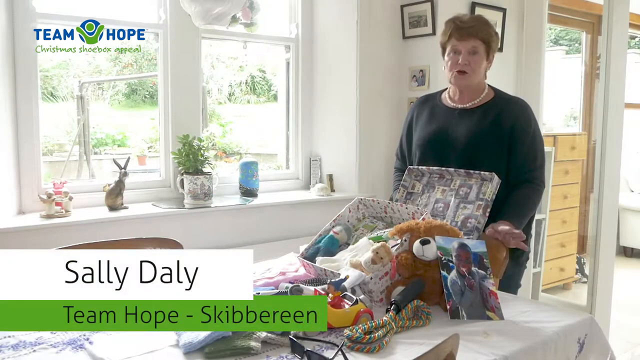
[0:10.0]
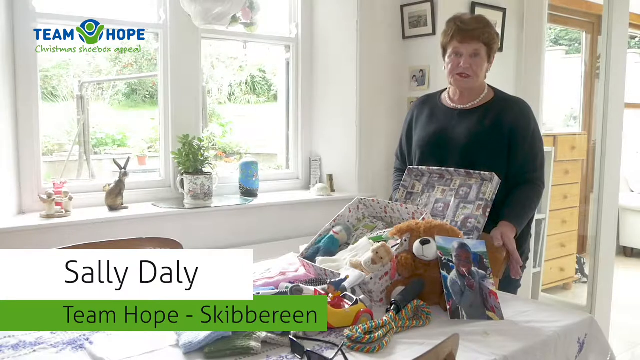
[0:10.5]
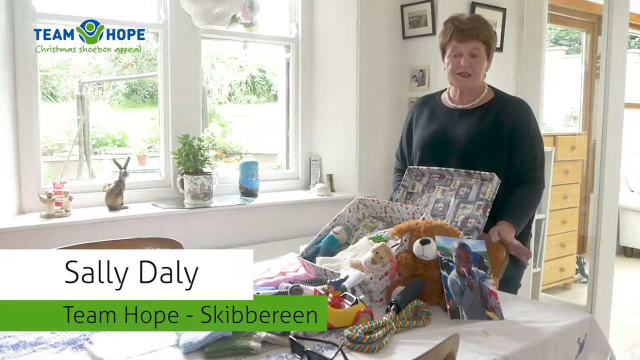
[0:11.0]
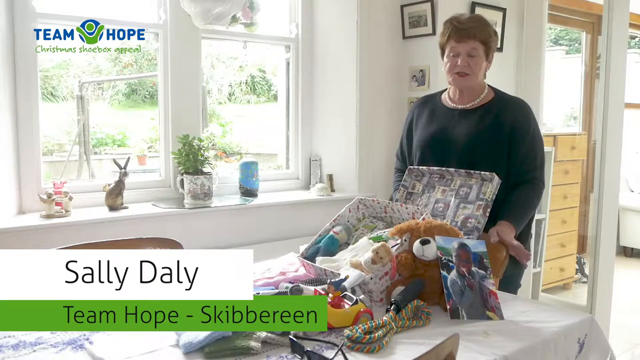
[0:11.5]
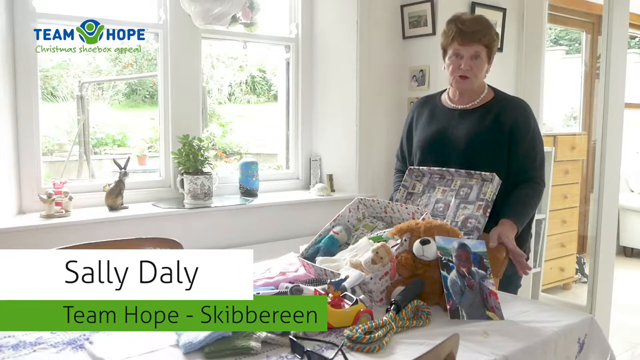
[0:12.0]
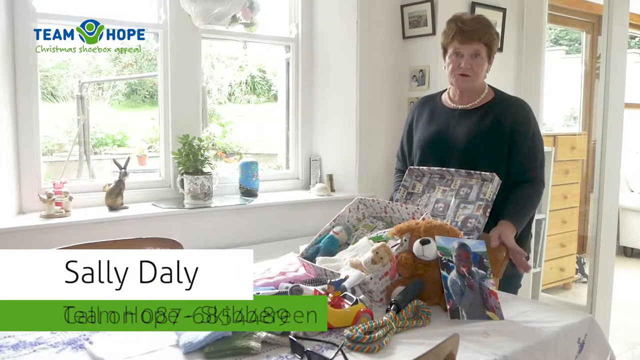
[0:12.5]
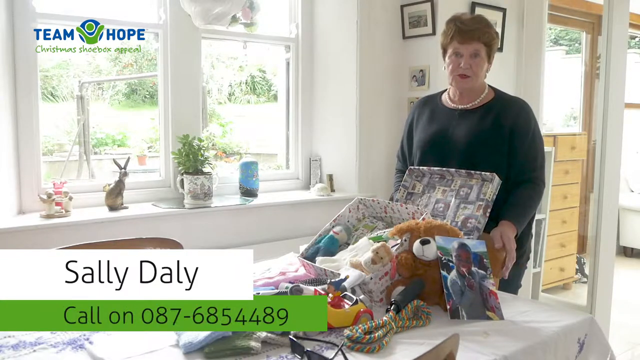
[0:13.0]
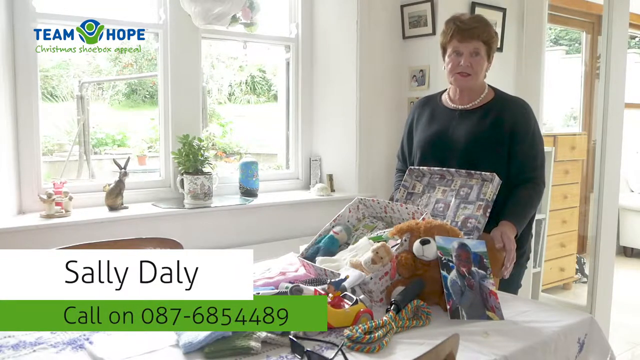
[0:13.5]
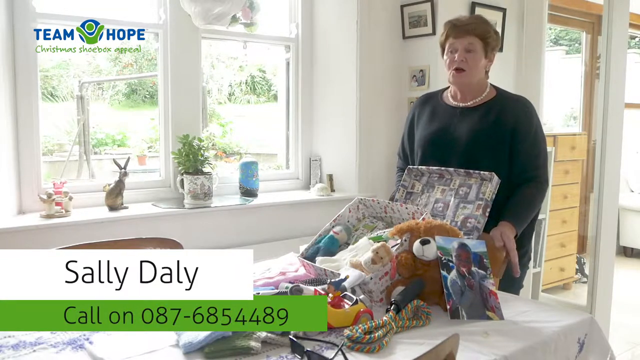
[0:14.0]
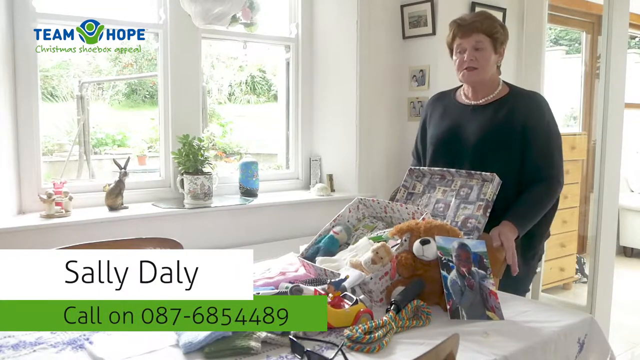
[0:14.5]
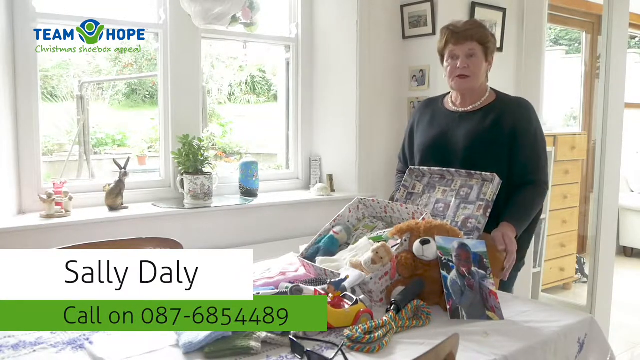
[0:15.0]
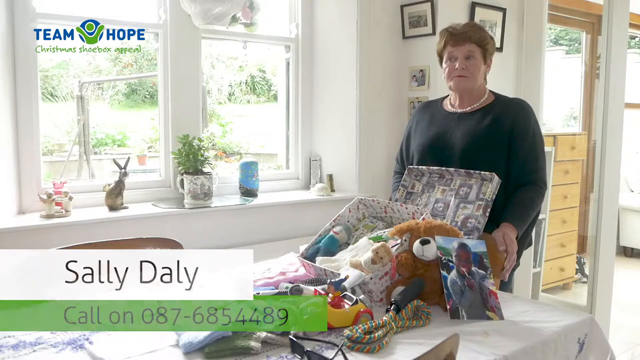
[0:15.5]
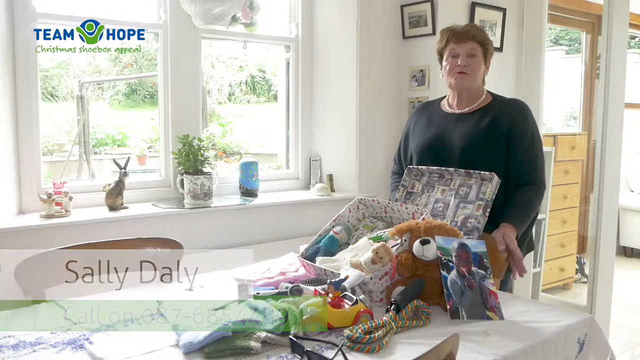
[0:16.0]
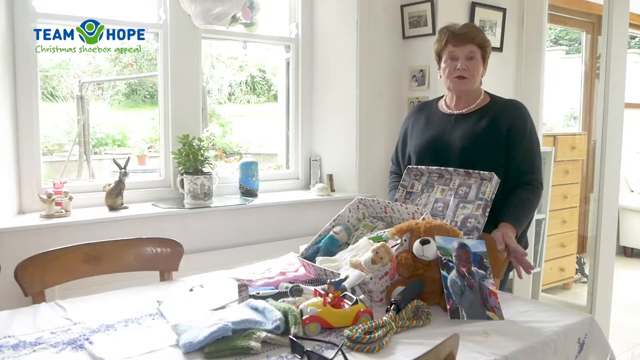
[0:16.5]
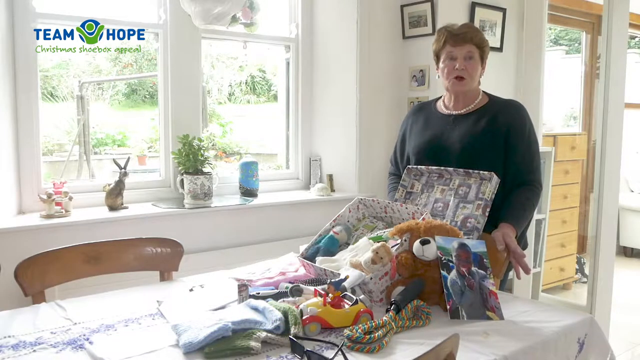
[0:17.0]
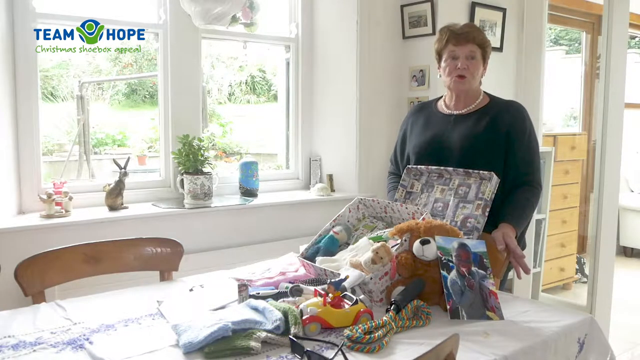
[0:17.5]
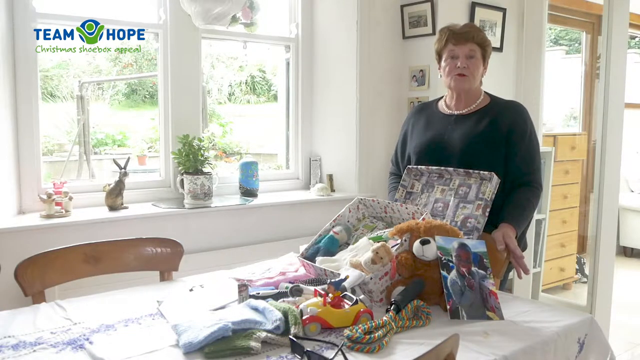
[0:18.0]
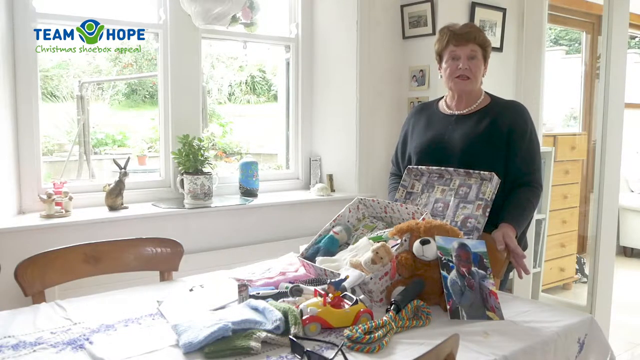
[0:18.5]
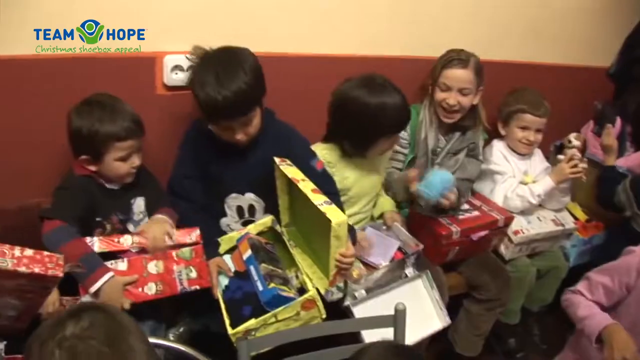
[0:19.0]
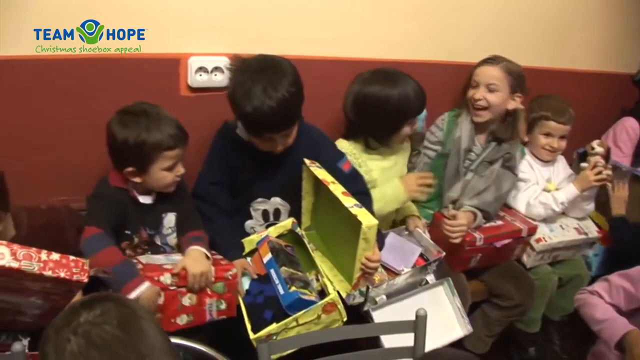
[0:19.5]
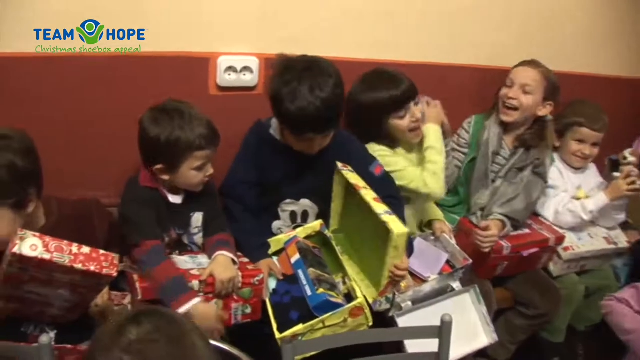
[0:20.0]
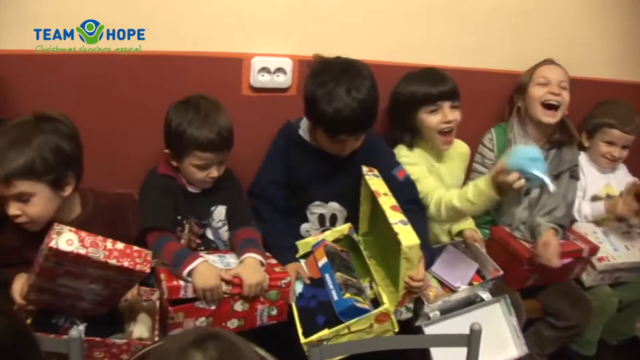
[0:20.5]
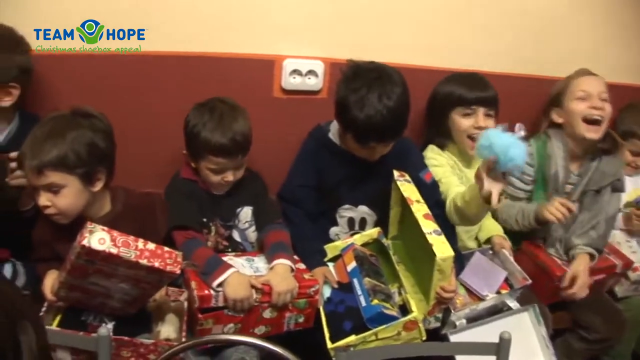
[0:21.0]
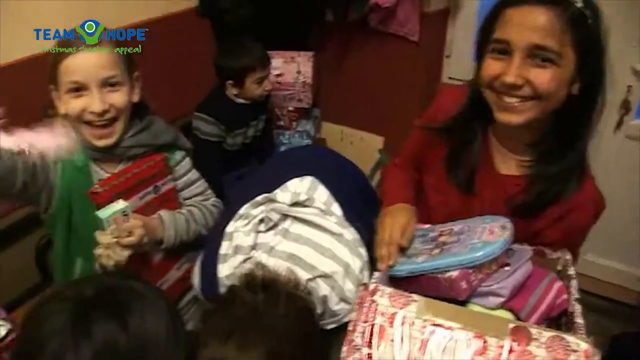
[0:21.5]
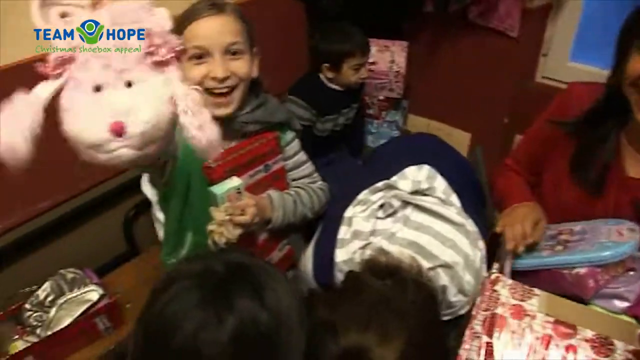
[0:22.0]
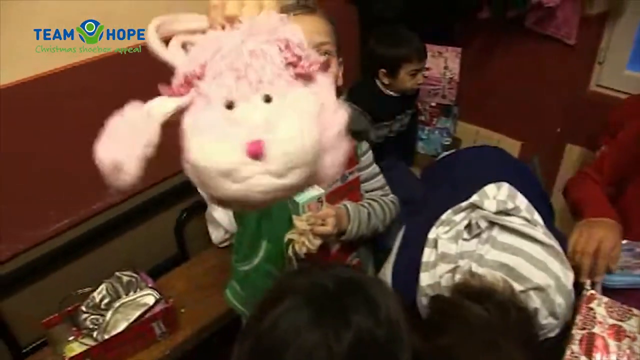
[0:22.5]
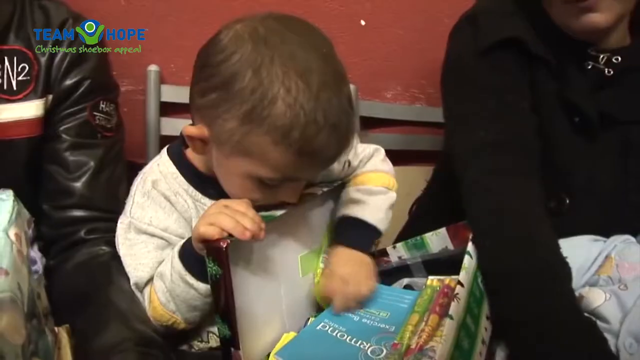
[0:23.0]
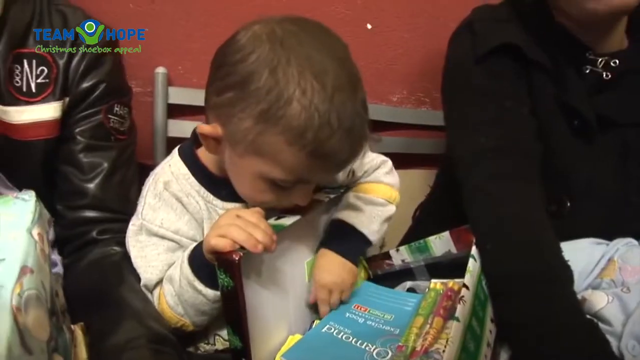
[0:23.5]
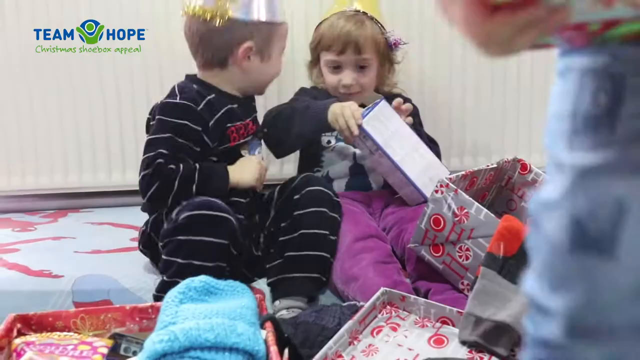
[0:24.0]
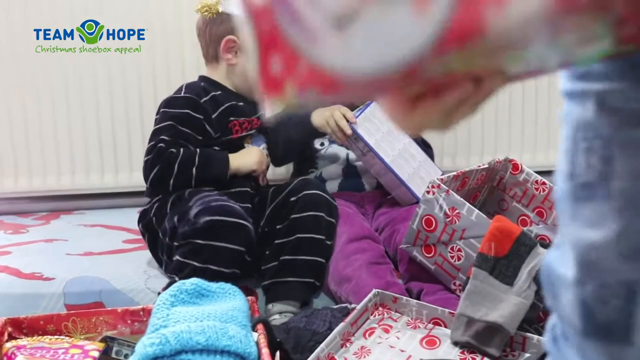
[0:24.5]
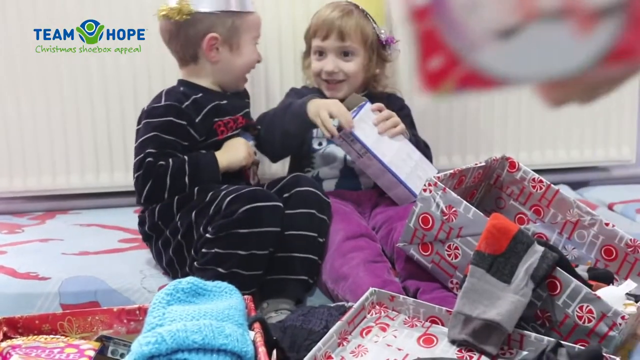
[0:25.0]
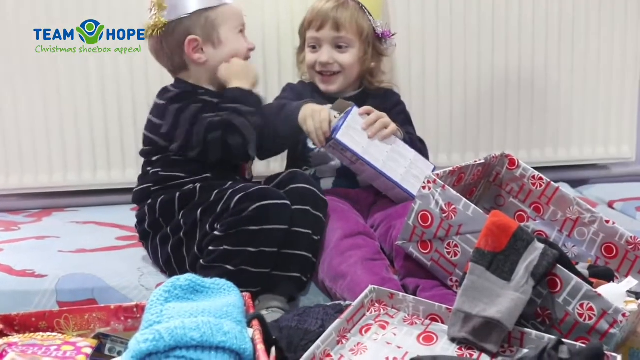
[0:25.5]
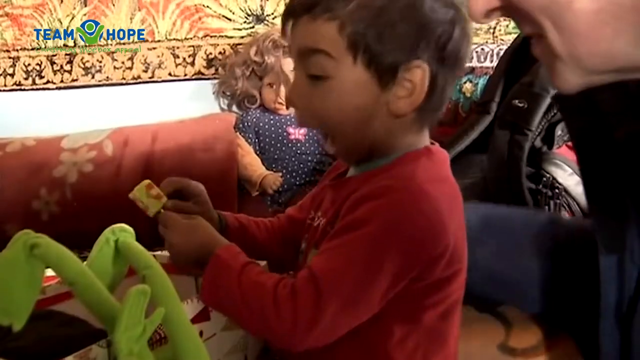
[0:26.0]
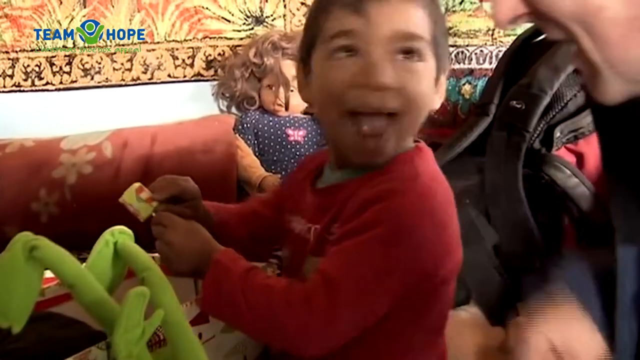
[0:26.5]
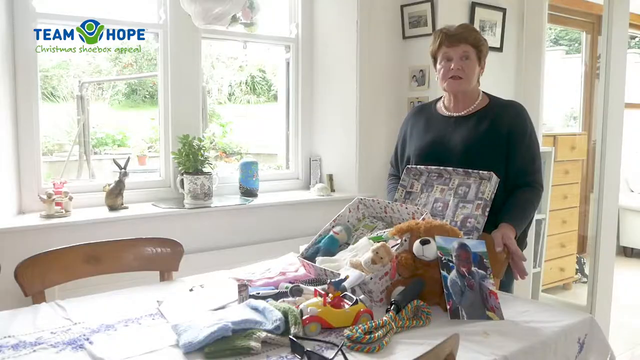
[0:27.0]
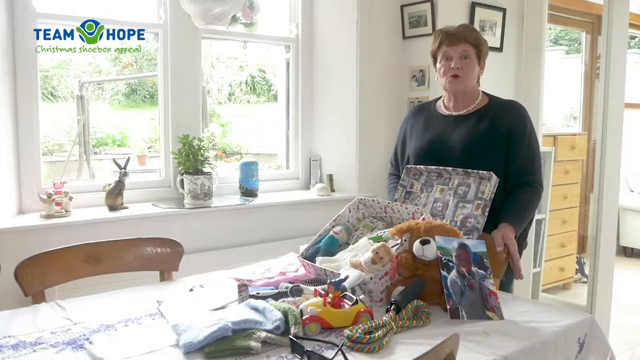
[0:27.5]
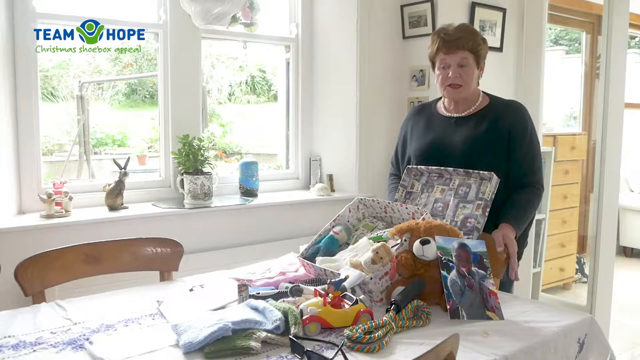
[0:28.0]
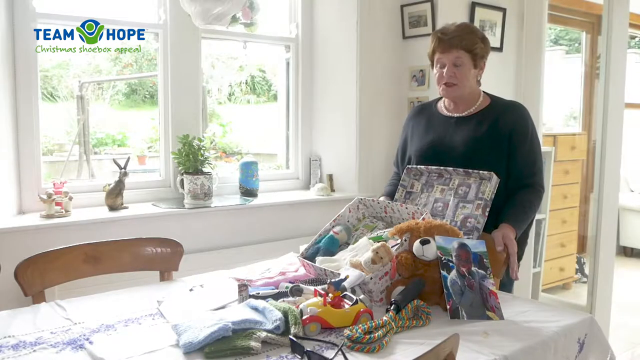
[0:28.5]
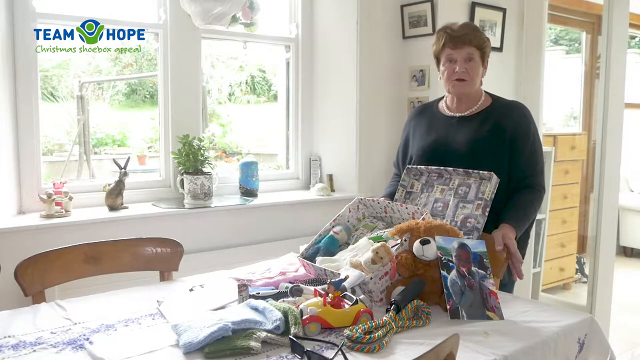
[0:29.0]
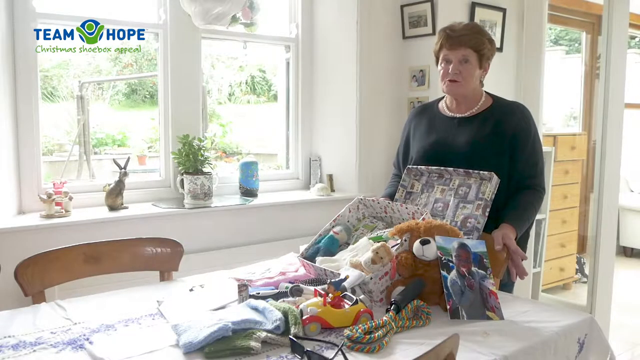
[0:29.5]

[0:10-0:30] A banner appears at the bottom left reading "Sally Daly," identifying the woman, along with "Team Hope Skibbereen" and "call on" followed by a telephone number. The video then shows children opening shoeboxes with toys and necessities inside. The shoebox is rather large, with room for many items. The video again shows scenes of children in a large room opening their boxes, full of joy. The woman is elderly, with very short brown hair, a long-sleeved black sweater, and a large pearl necklace.